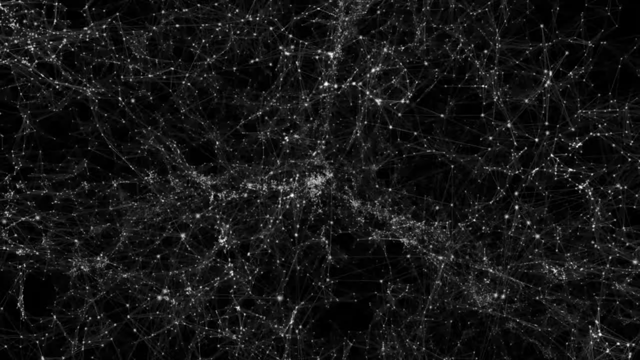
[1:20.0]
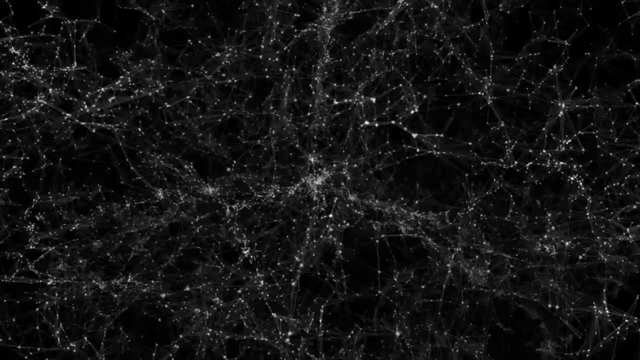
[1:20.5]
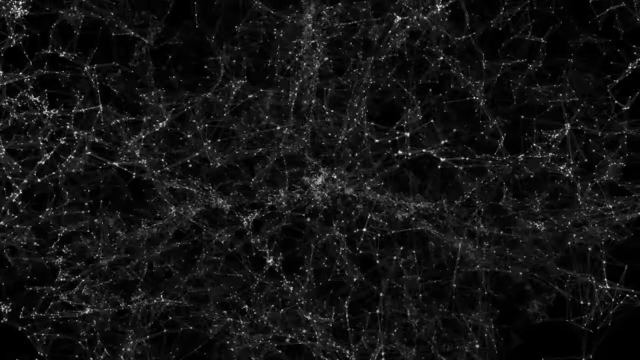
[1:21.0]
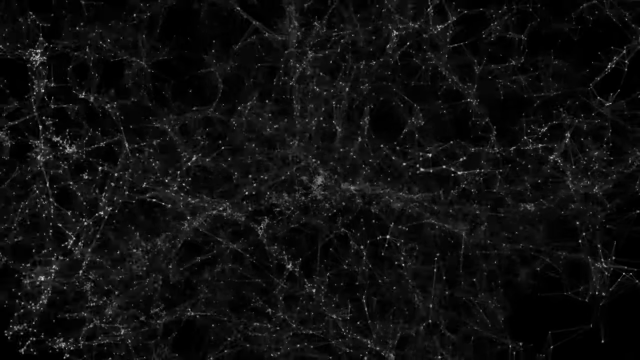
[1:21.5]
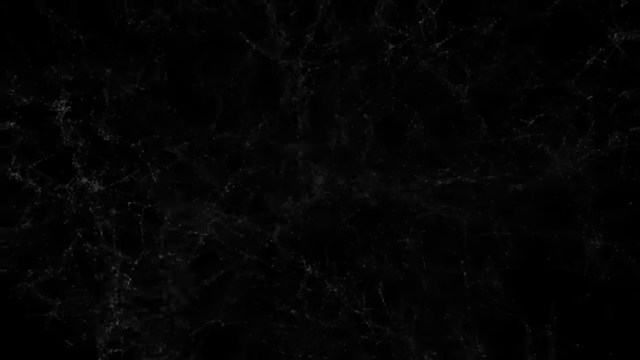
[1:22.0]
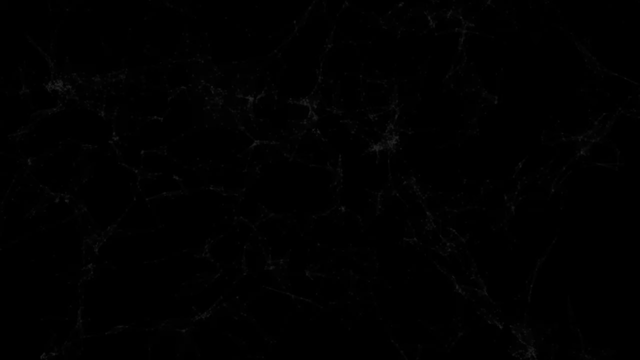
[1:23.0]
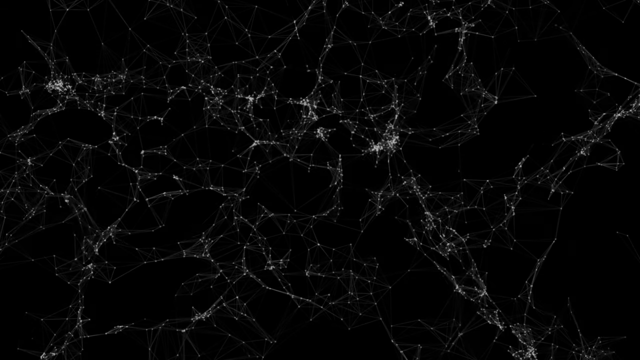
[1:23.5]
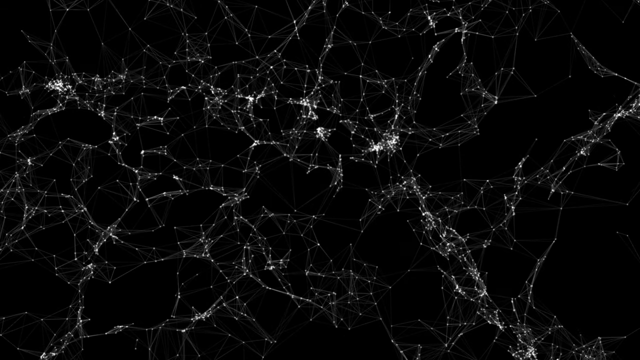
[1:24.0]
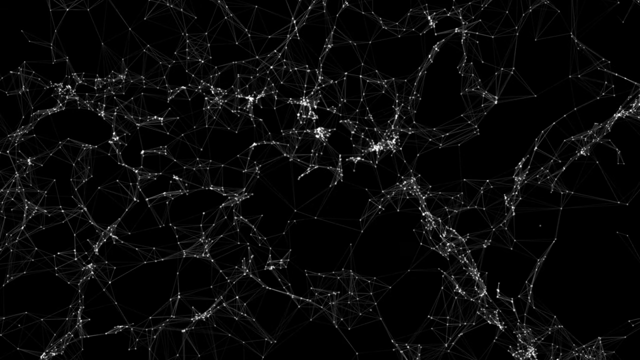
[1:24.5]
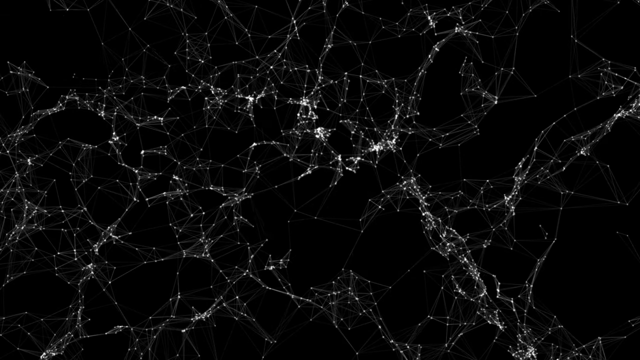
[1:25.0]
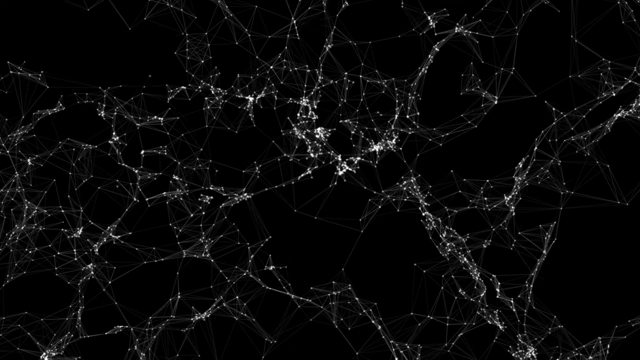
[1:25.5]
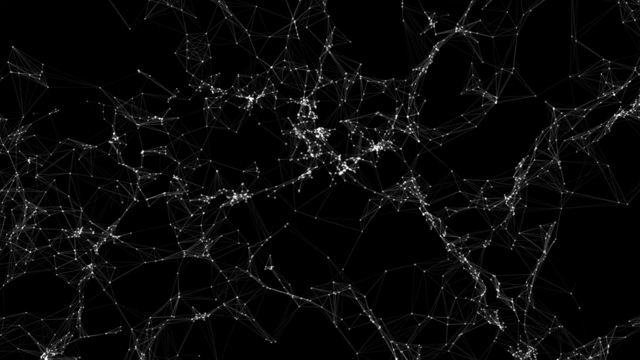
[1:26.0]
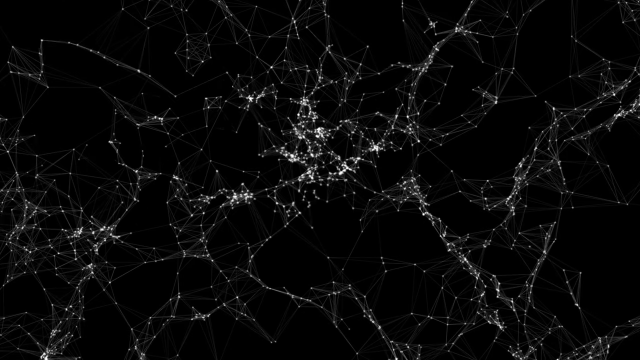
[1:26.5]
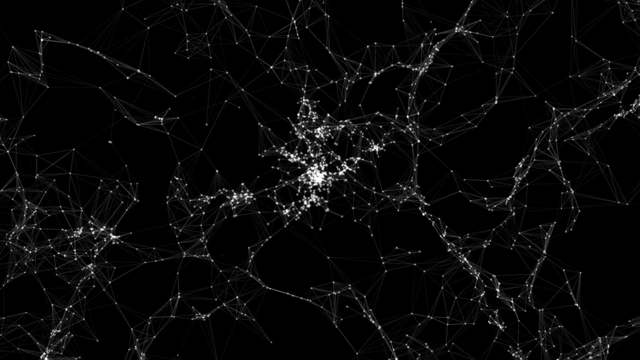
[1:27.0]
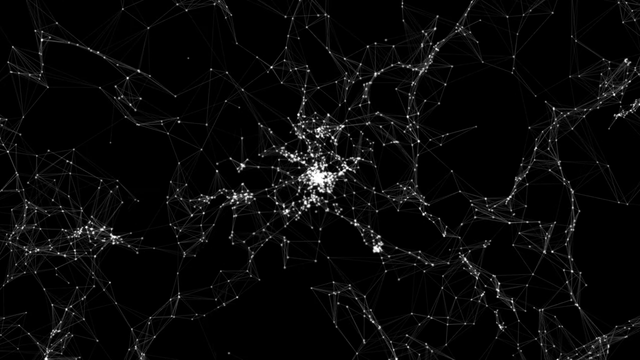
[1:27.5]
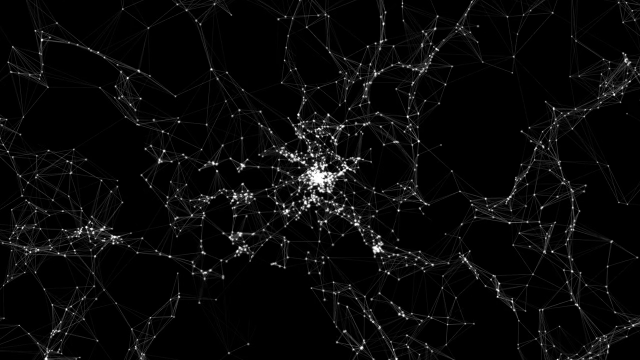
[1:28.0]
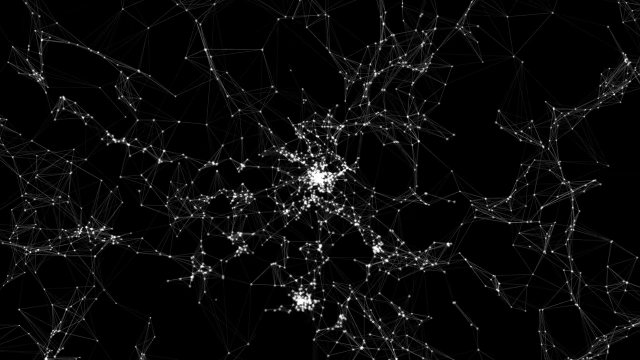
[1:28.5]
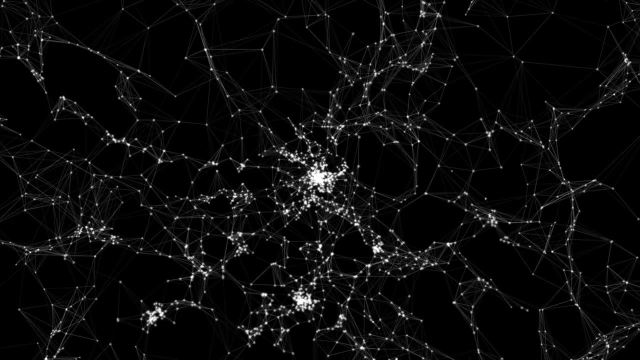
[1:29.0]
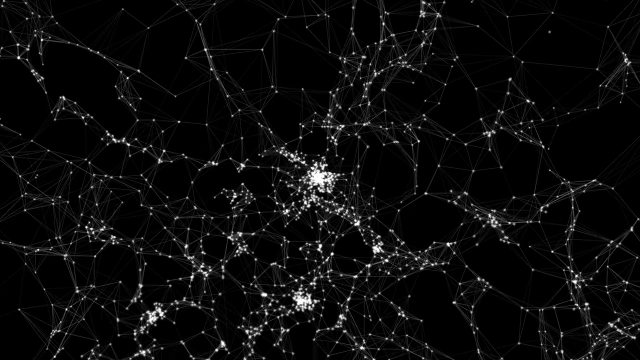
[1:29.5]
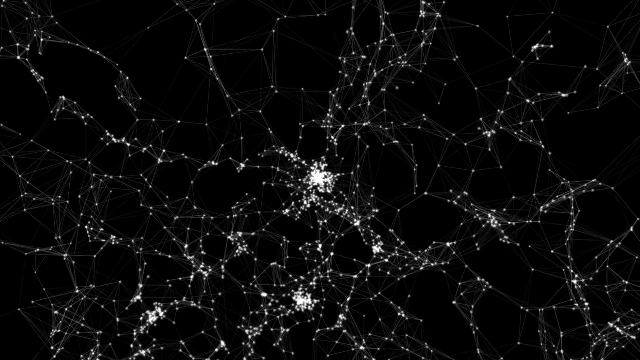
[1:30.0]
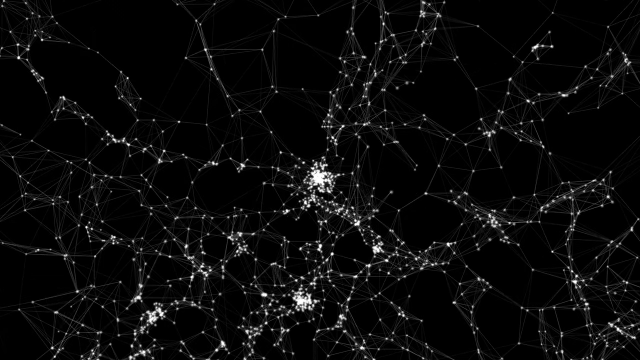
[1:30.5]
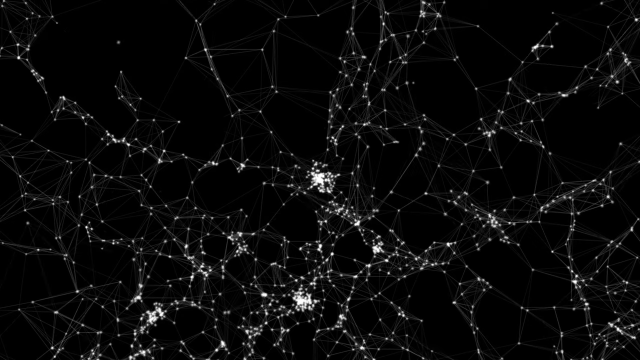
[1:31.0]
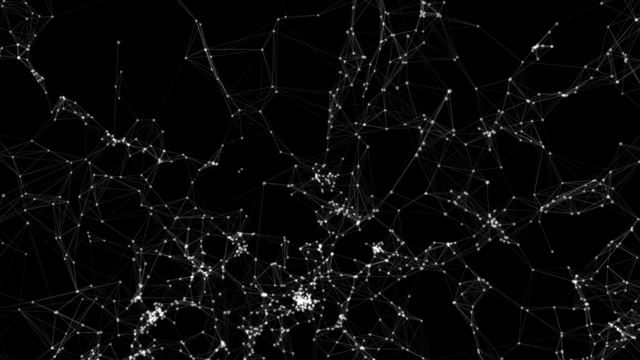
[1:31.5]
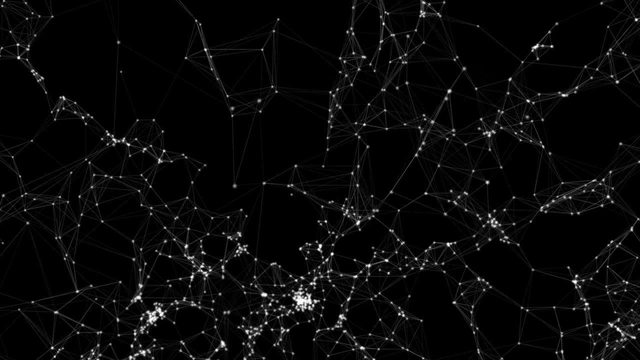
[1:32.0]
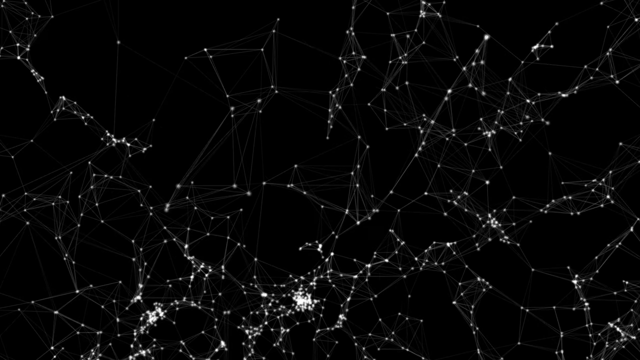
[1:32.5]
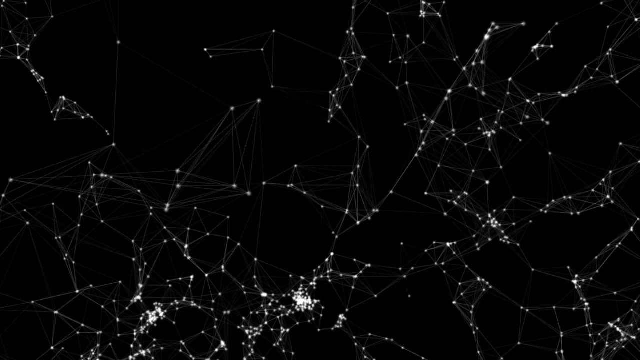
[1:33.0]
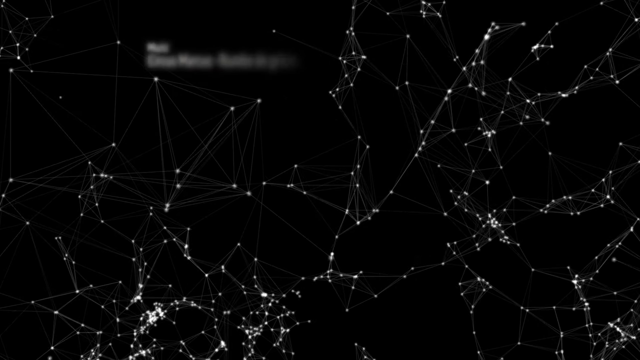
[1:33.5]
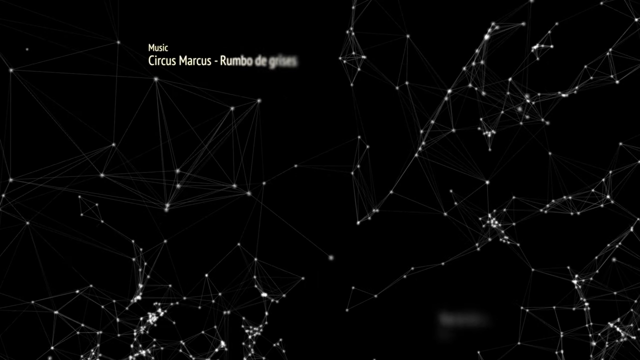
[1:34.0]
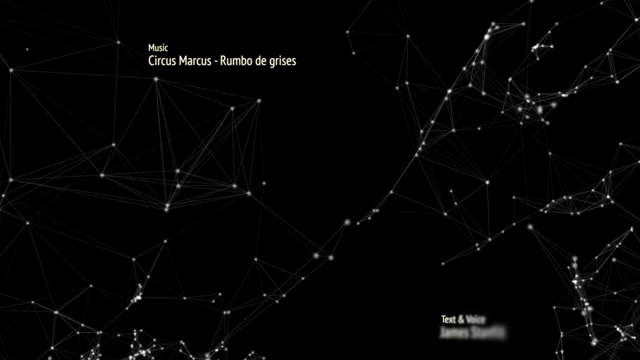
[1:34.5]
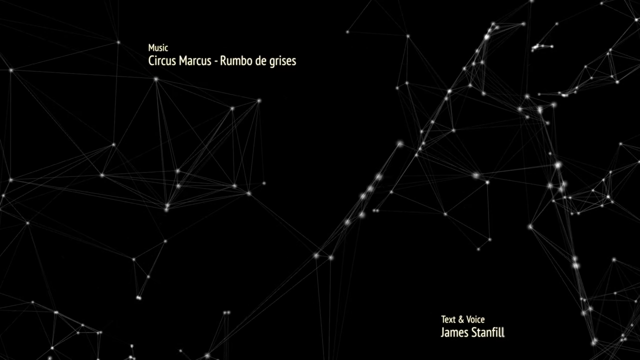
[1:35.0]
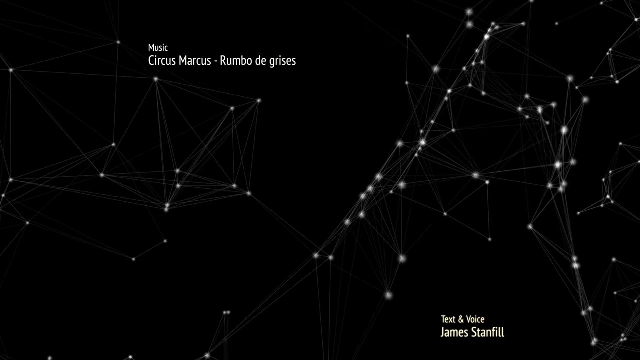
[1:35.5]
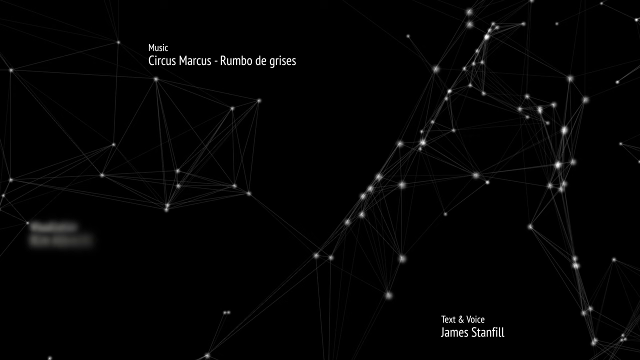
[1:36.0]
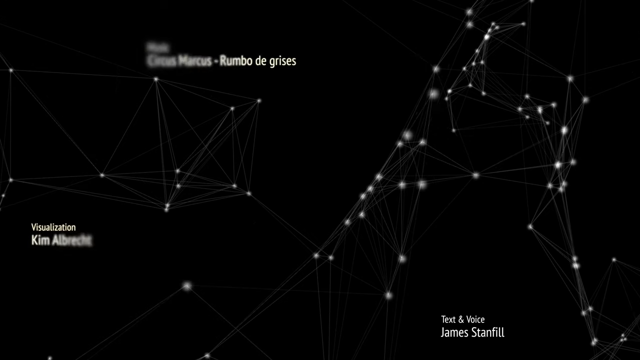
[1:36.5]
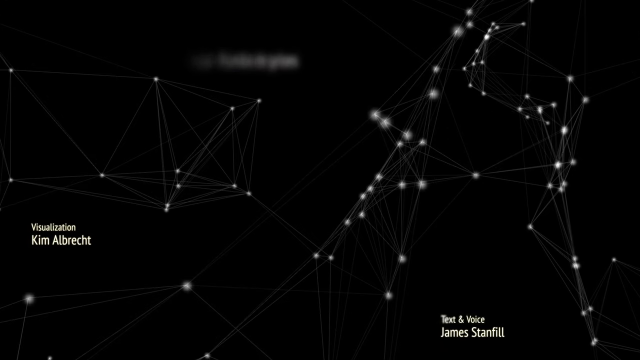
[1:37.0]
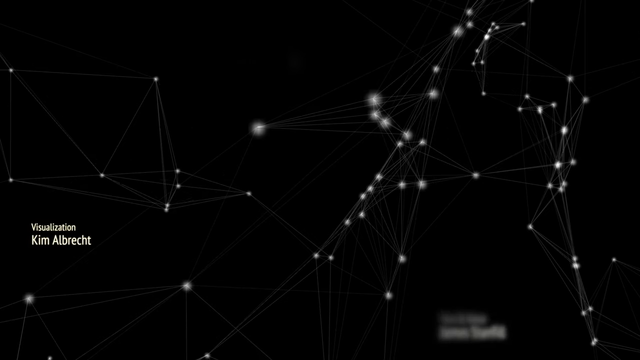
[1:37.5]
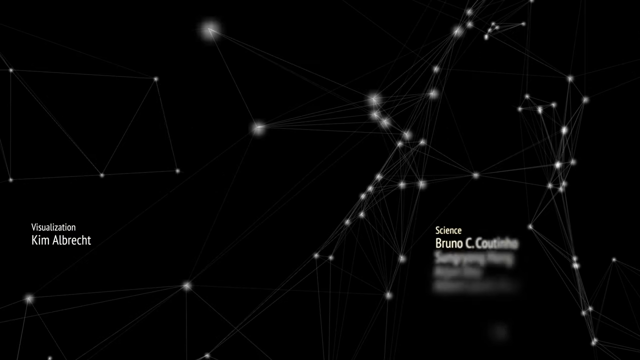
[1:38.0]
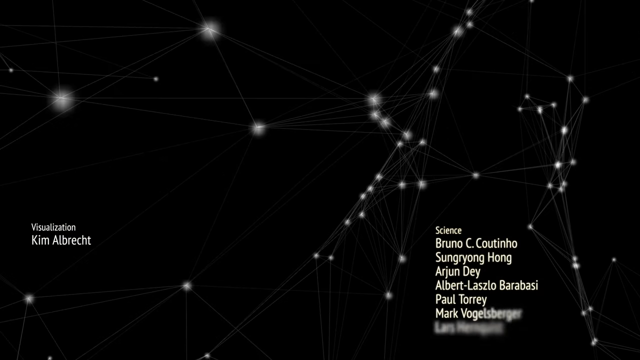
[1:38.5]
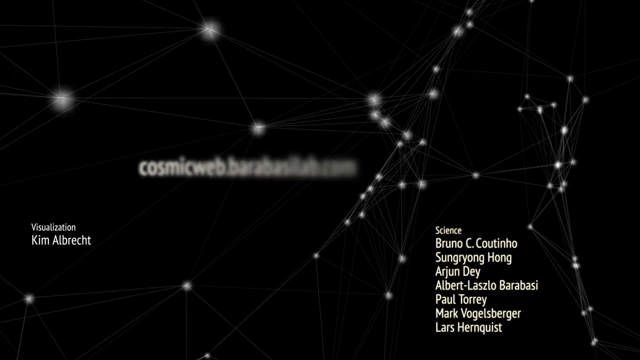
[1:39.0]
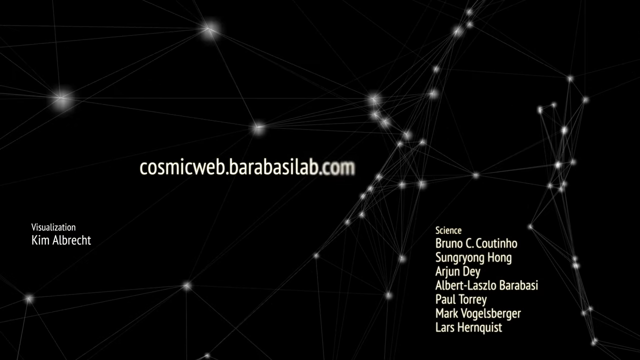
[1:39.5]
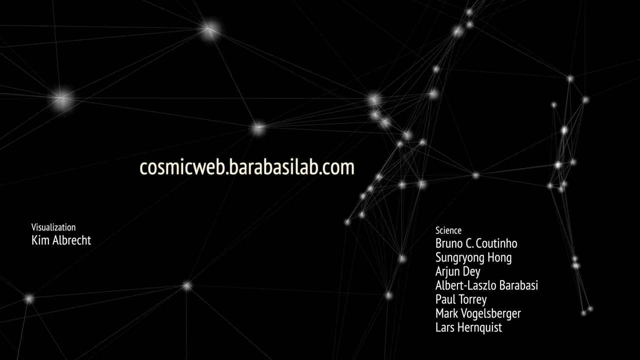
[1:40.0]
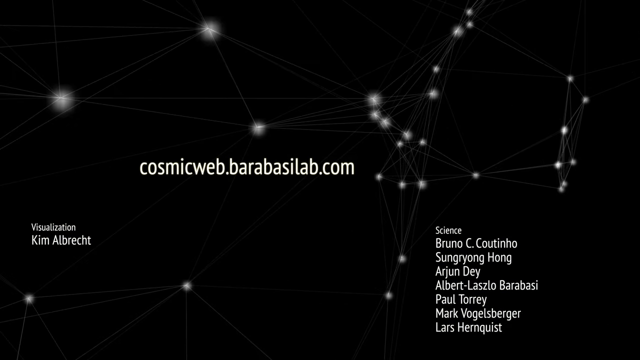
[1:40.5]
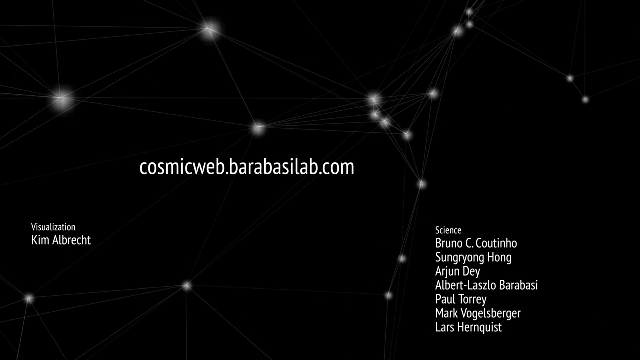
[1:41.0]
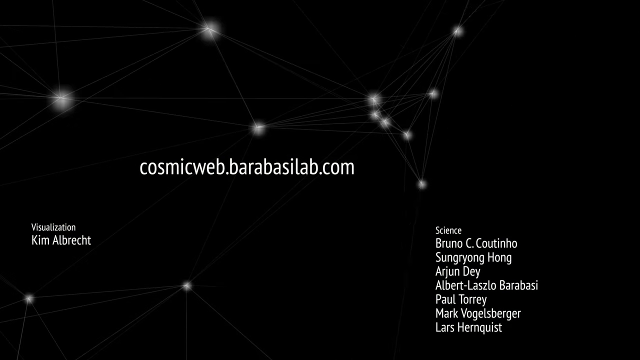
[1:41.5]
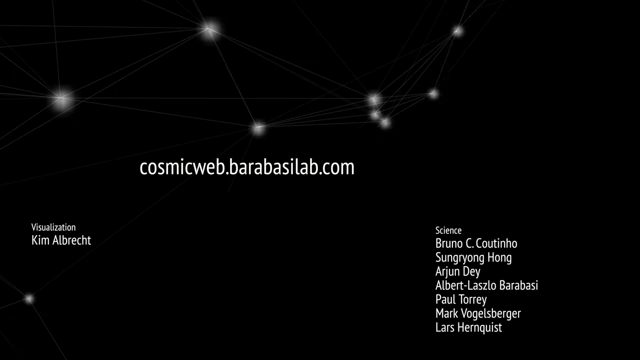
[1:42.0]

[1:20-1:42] White lines with small circles clustered together appear on a black background, all connected to each other in what looks like a web. The view moves somewhat before transitioning to a black background with lines connecting little dots, some of them in clusters, brighter in some areas than in others. They come up on the screen and go away throughout the picture. The center has many more clusters, which get brighter and closer together, and the view continues across the screen as some of the lines go off it. Text then pops up reading "music, circus, Marcus, Rumbo de Grises, text and voice, James Stanfill, visualization, Kim Albert, science, Bruno C. Kutenhoe, Sungryong Hong, Arjun De, Albert, Laszlo, Barabasi, Paul Tory, Mark Vogelsberger, Lars Hurnquist," followed by text reading "cosmicweb.barabislab.com." All the lines with the little orbs slowly go off the screen.